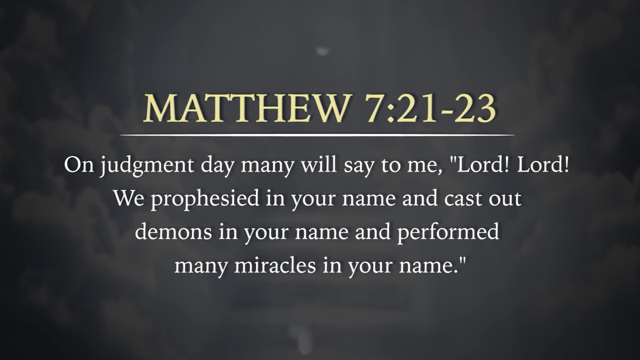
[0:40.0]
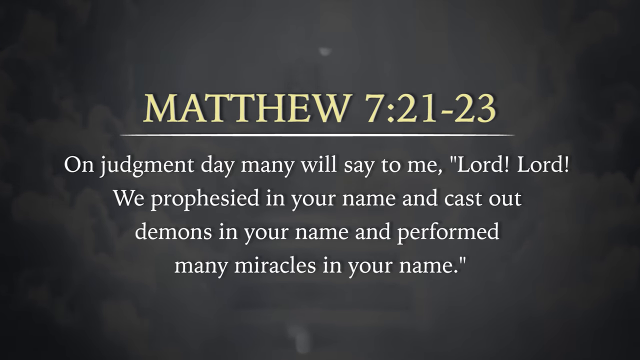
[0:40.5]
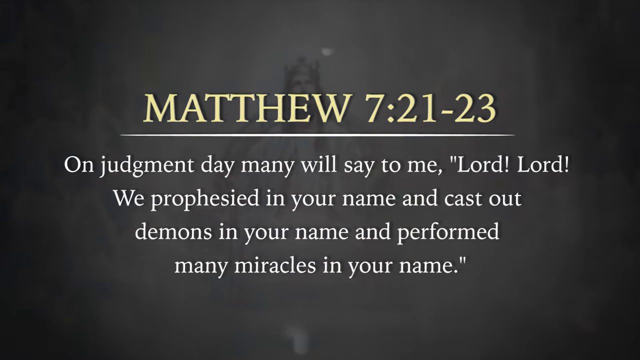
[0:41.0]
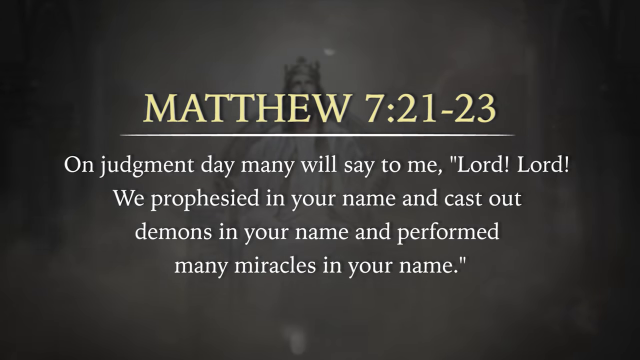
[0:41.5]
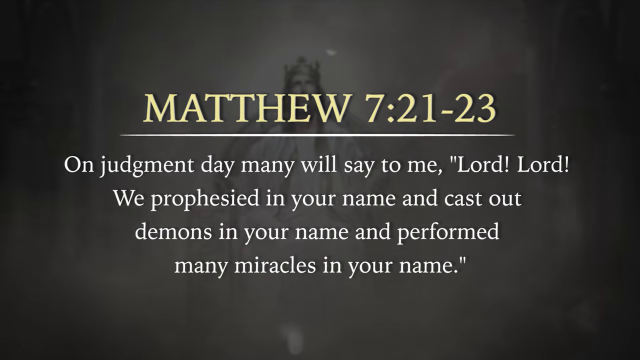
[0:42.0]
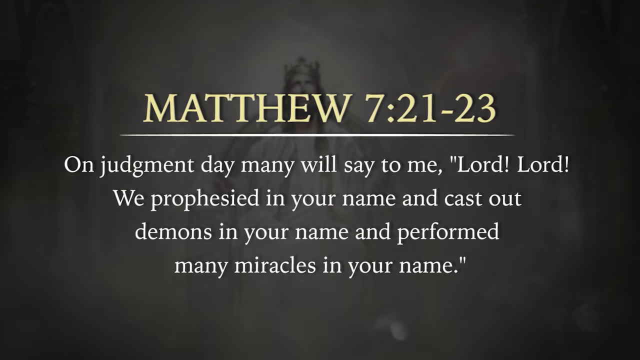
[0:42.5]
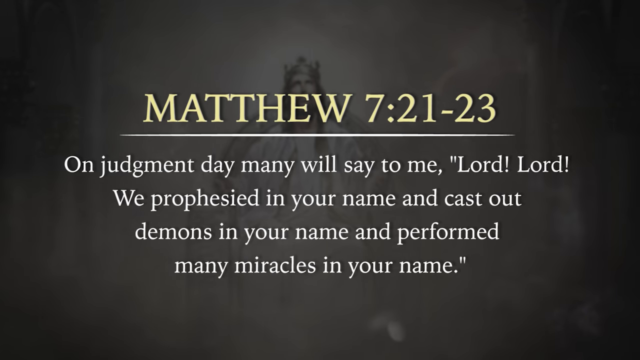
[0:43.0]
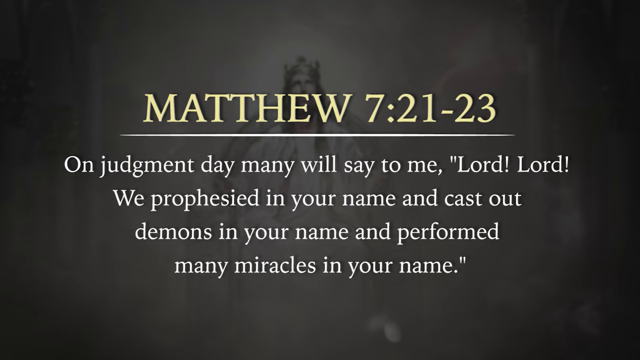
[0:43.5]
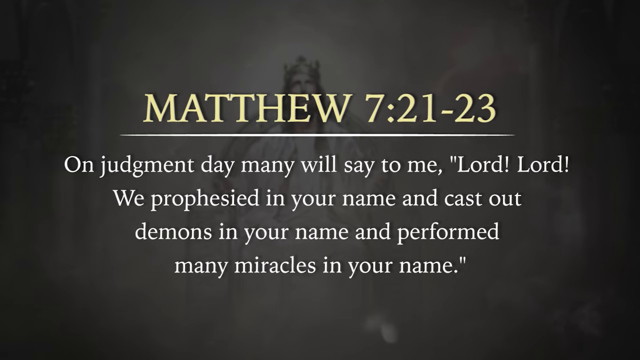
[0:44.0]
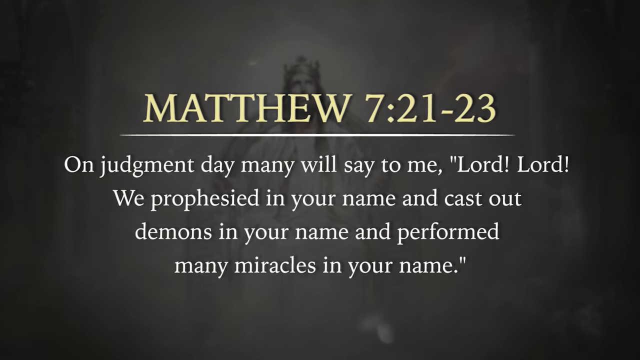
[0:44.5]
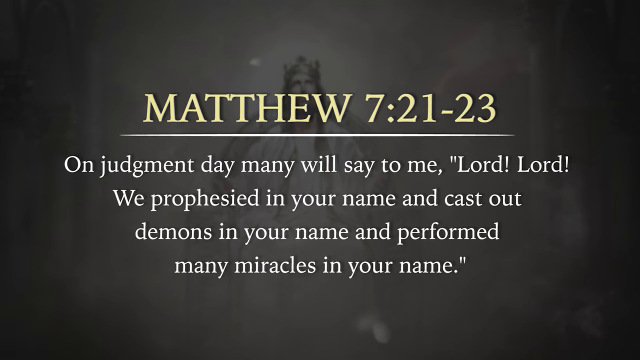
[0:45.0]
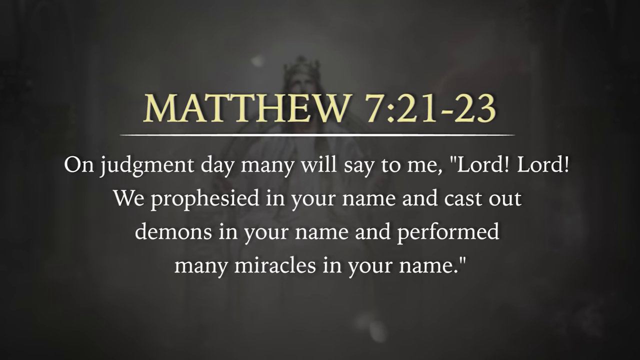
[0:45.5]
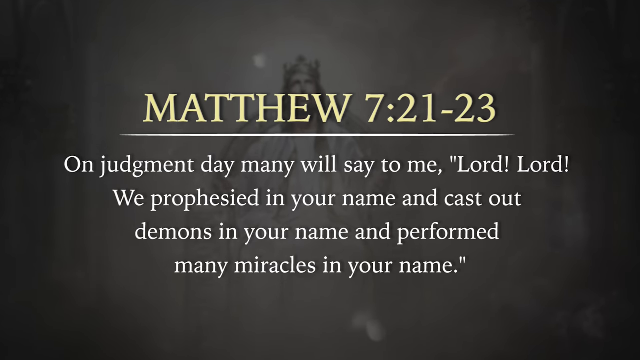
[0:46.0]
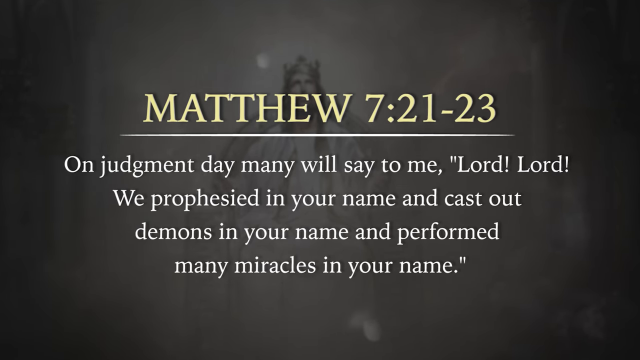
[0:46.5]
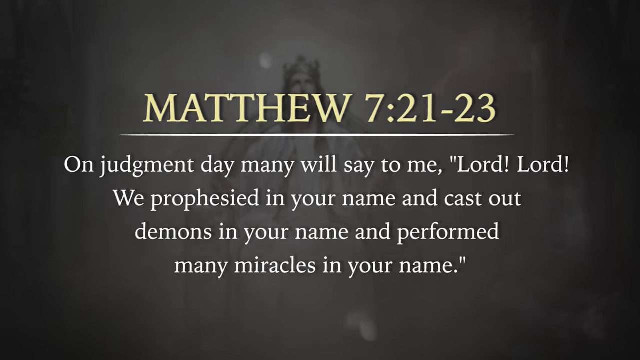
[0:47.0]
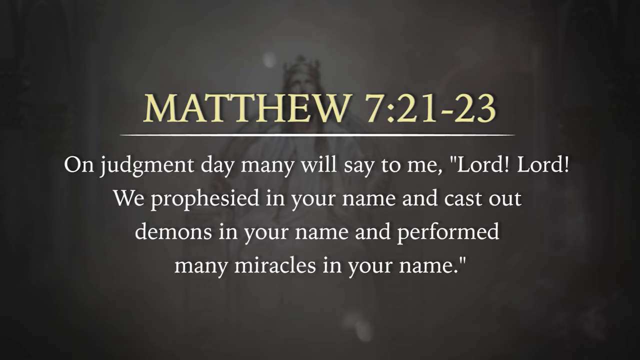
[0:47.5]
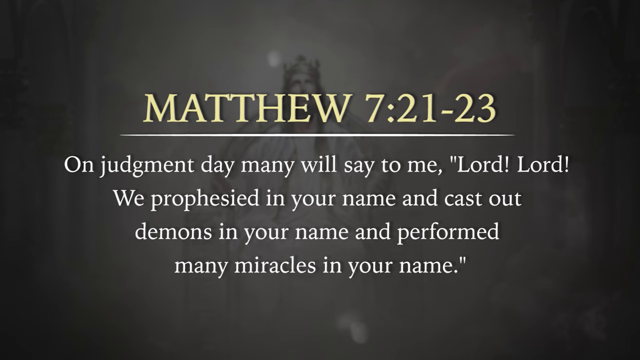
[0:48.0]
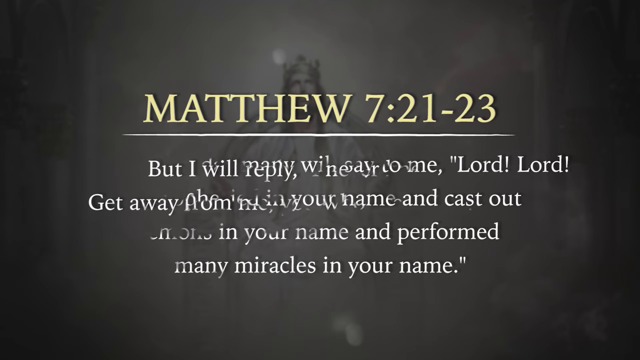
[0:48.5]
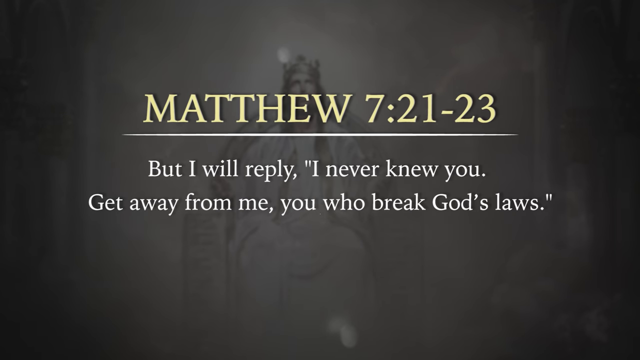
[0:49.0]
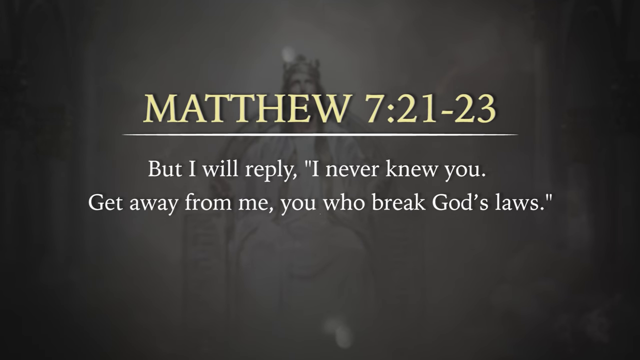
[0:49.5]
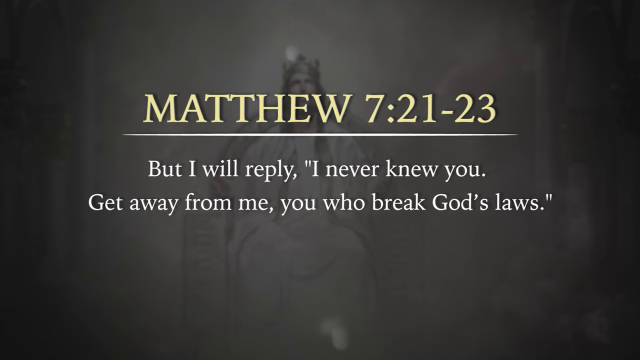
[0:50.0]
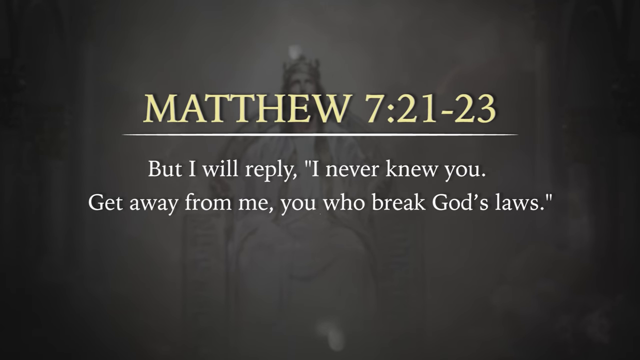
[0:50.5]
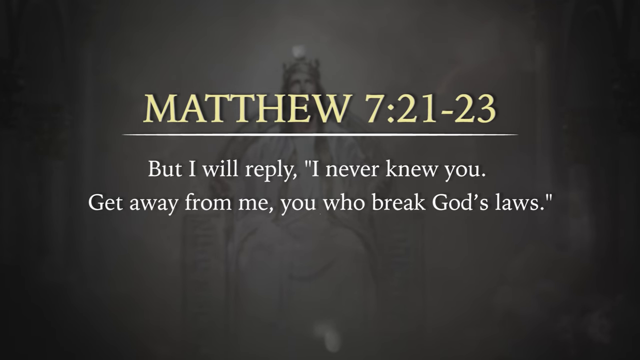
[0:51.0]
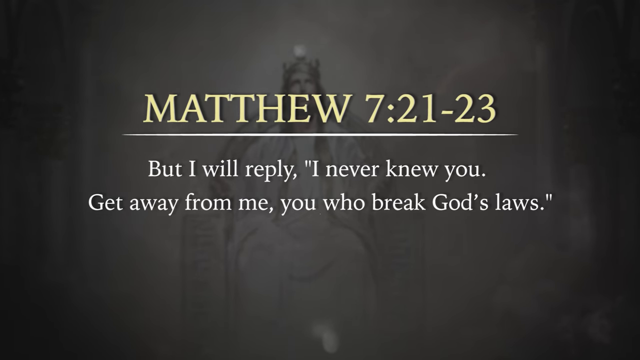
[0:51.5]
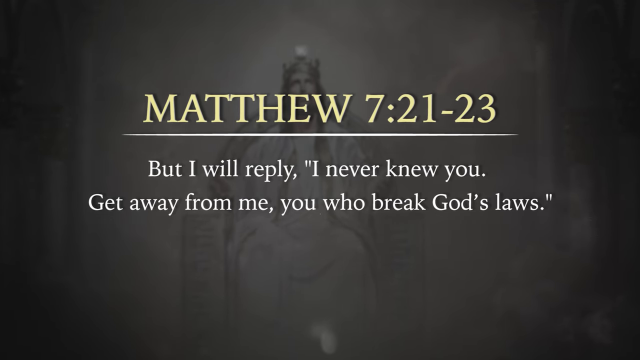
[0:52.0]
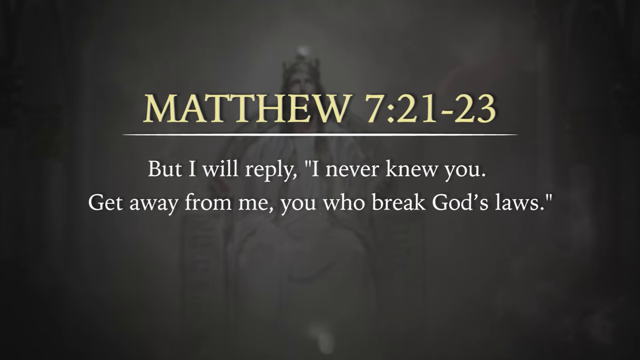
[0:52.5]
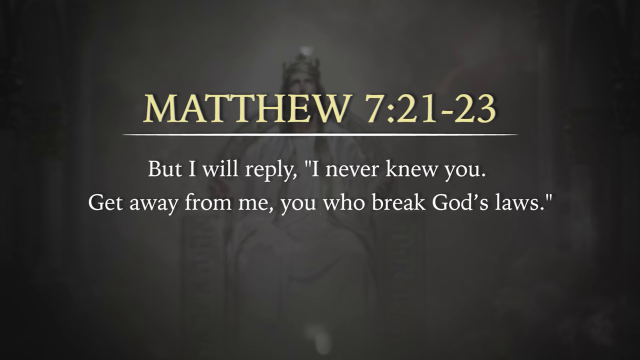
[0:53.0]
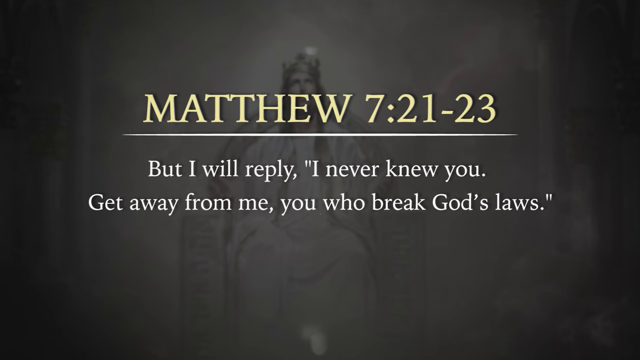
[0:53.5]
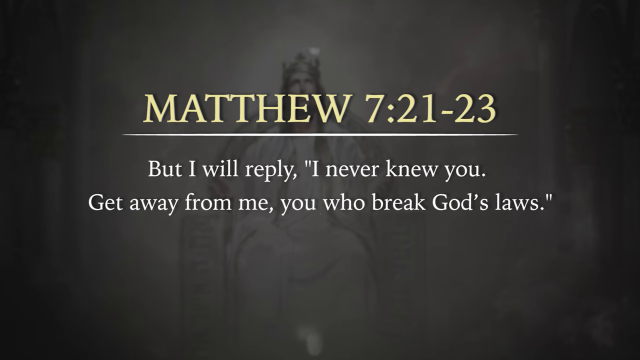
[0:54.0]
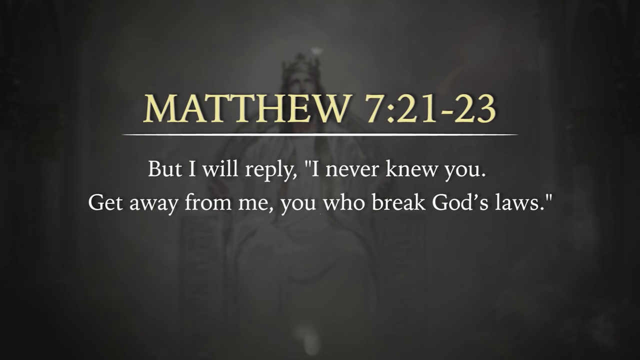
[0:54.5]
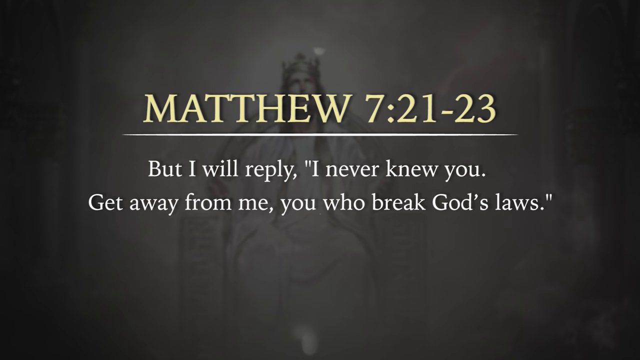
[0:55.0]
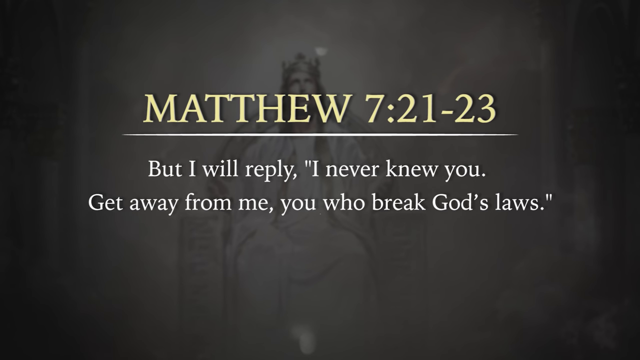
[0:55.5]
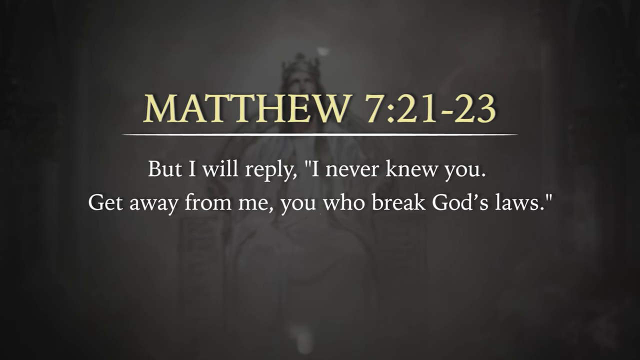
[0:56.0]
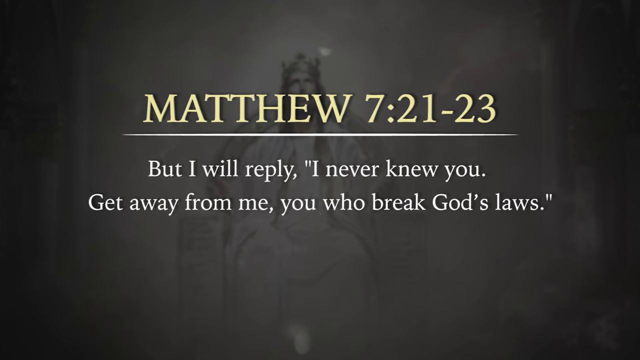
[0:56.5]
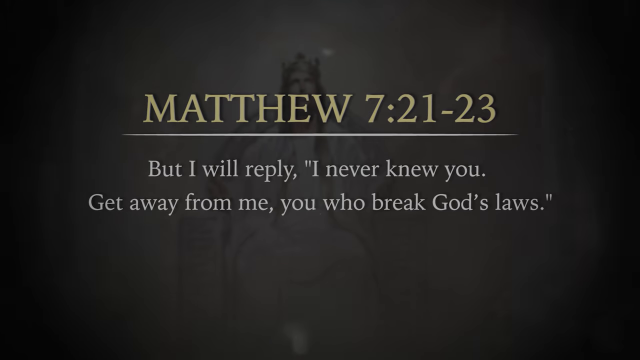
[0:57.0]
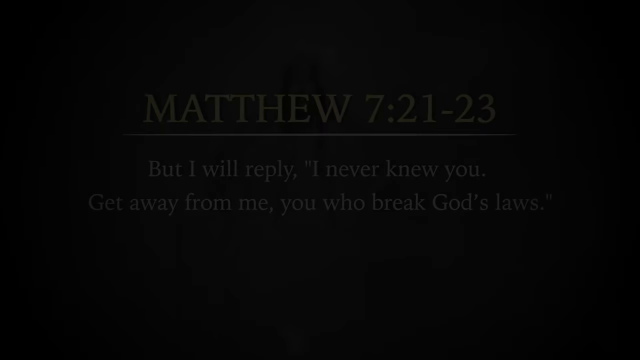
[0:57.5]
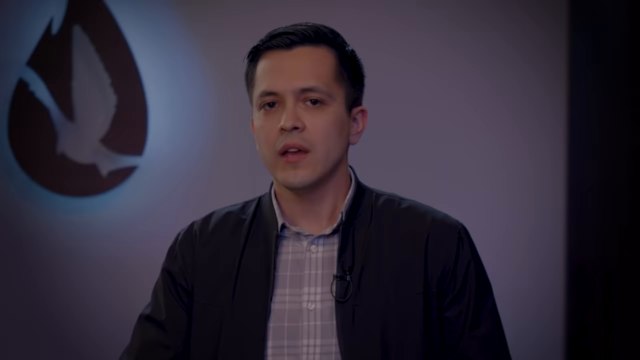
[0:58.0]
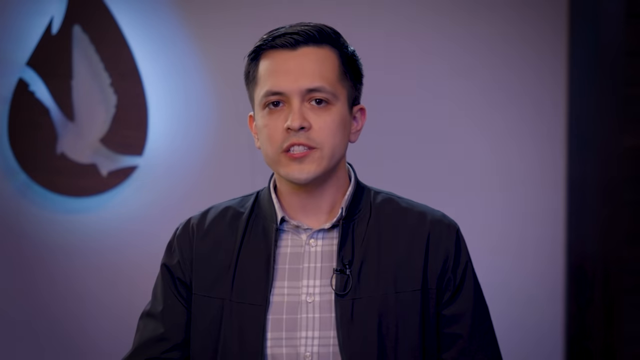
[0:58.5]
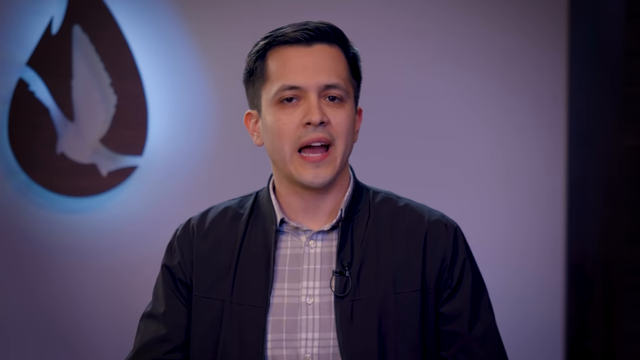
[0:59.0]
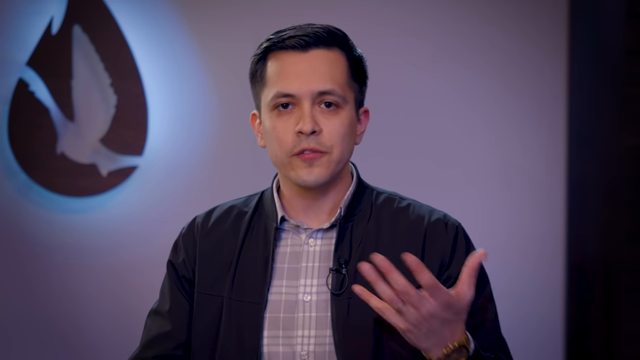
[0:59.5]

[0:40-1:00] An image with a dark background shows, in its center, a male figure wearing a crown and sitting on a sort of throne. Sentences in white appear in the center of the screen, and in the upper part of the frame there is yellow text with an underline. Near the end, a man in the center of the frame speaks while looking at the camera and moving his left hand. He has short, dark, well-groomed hair and wears a black jacket and a light-colored t-shirt, with a very small black microphone attached to the jacket at the top of his chest. Behind him is a white wall, and on the left of the wall there is an irregular dark logo.